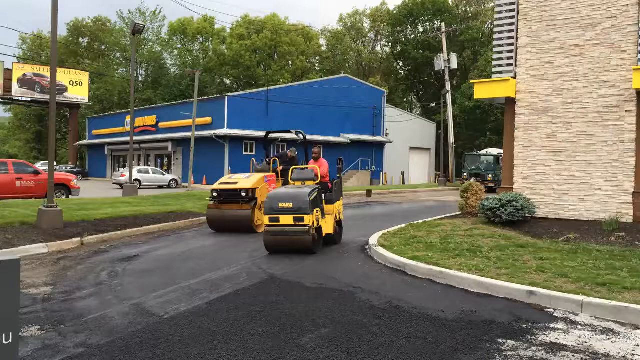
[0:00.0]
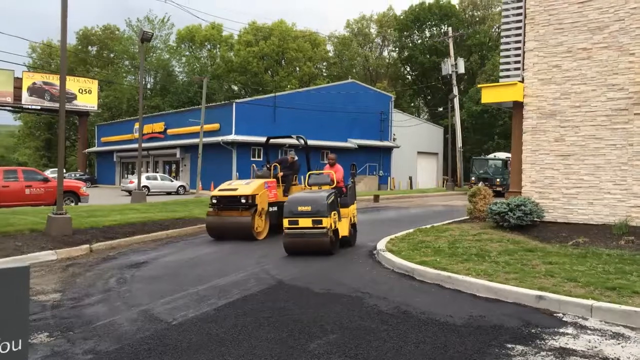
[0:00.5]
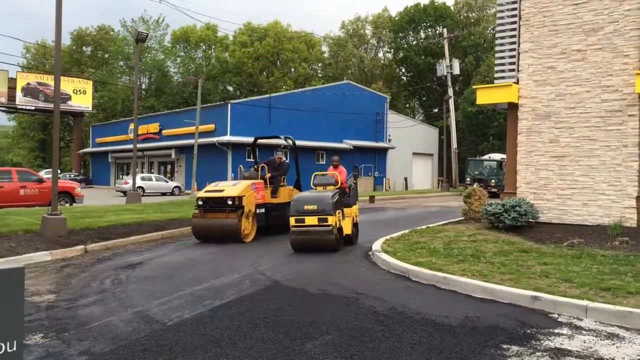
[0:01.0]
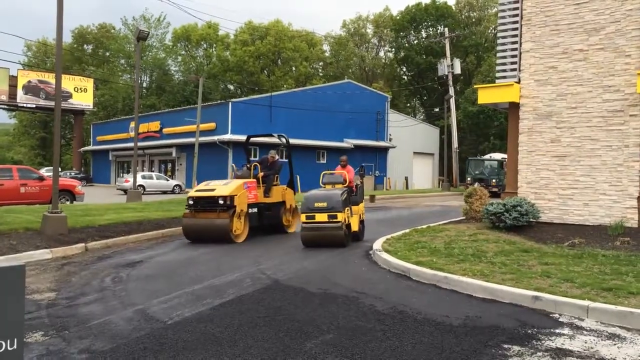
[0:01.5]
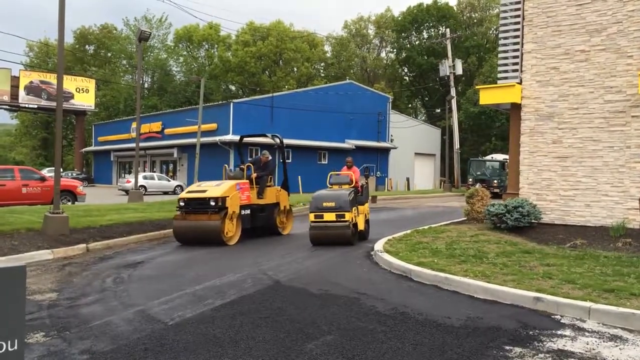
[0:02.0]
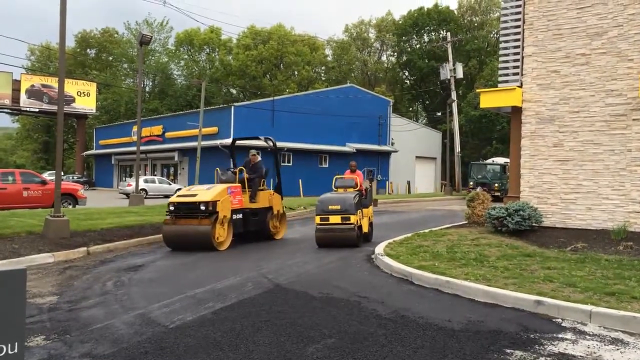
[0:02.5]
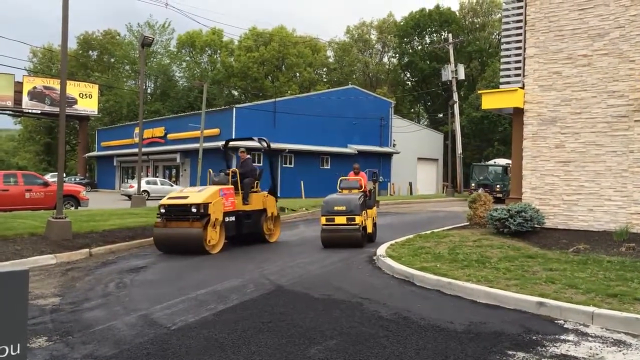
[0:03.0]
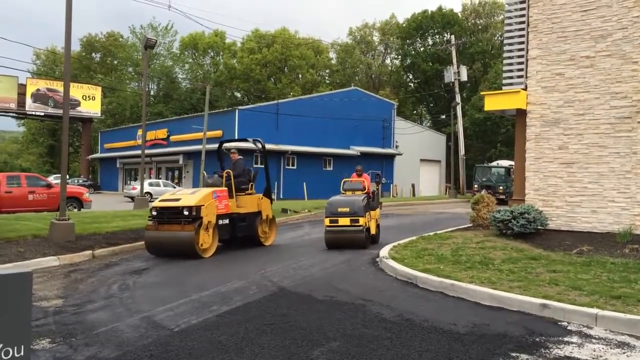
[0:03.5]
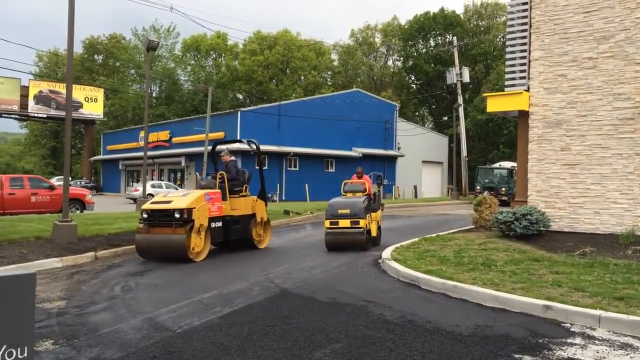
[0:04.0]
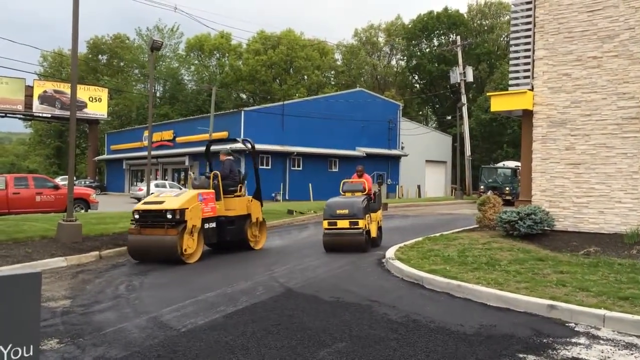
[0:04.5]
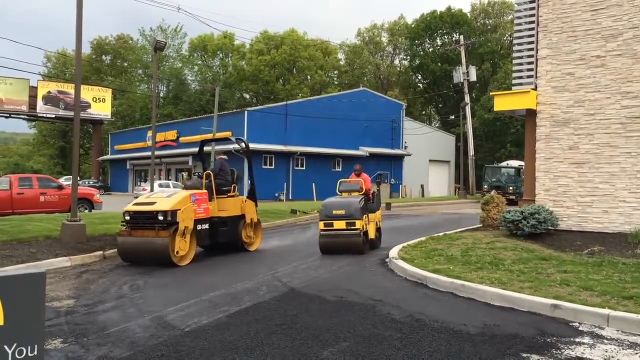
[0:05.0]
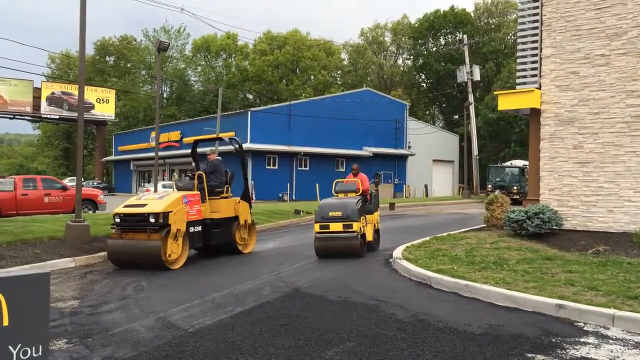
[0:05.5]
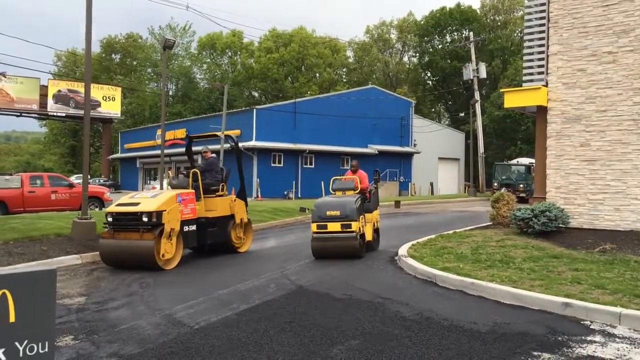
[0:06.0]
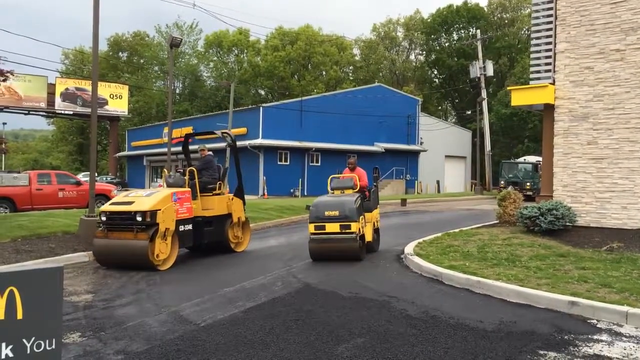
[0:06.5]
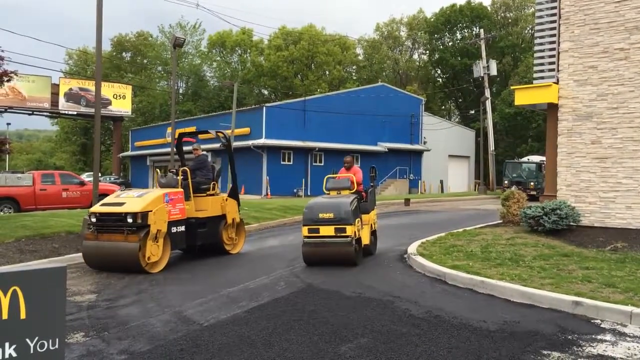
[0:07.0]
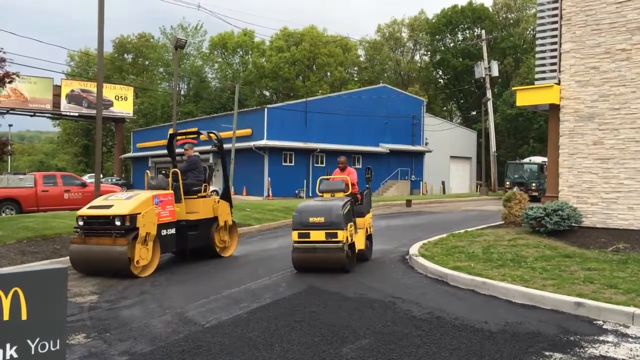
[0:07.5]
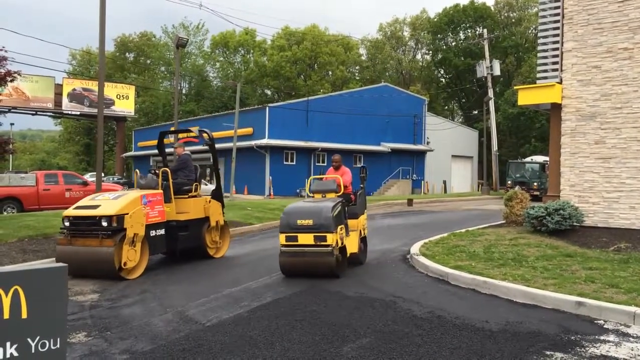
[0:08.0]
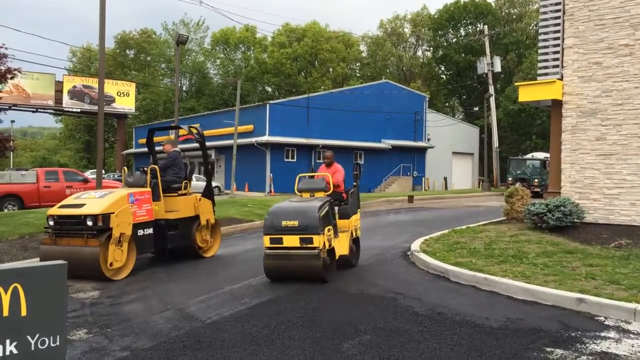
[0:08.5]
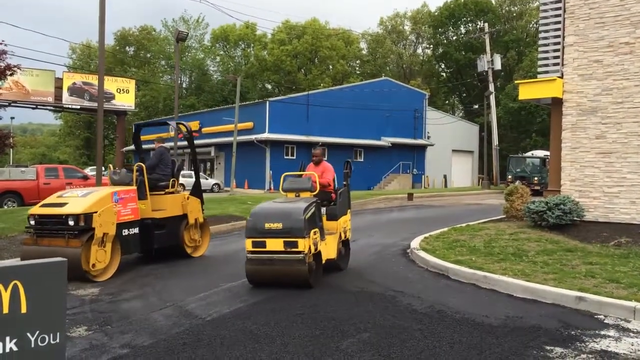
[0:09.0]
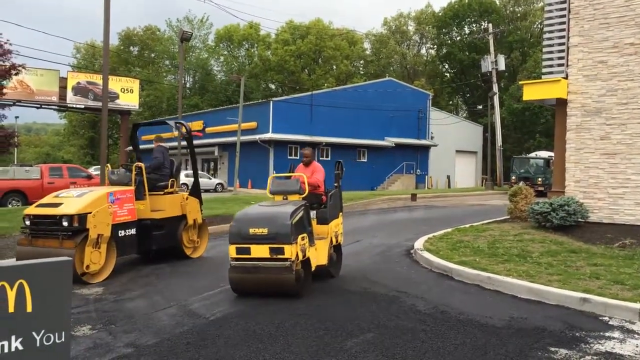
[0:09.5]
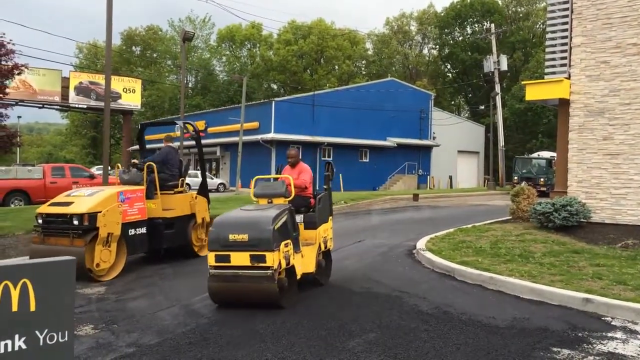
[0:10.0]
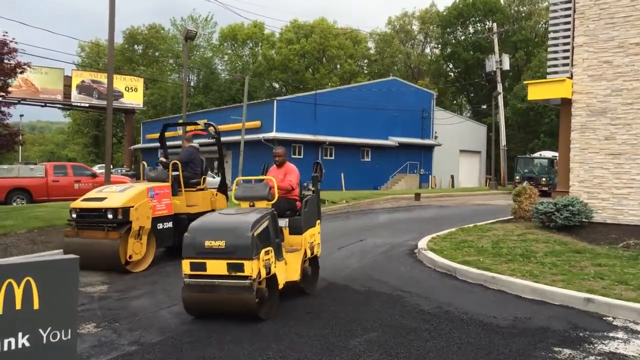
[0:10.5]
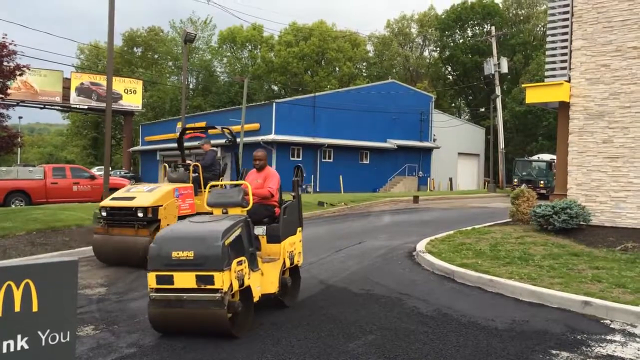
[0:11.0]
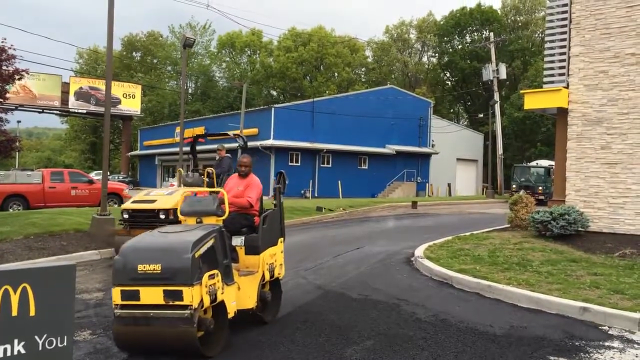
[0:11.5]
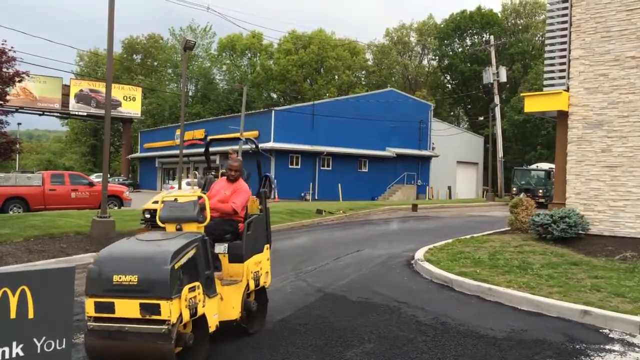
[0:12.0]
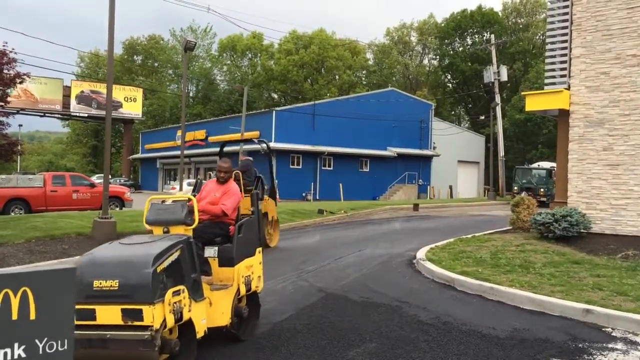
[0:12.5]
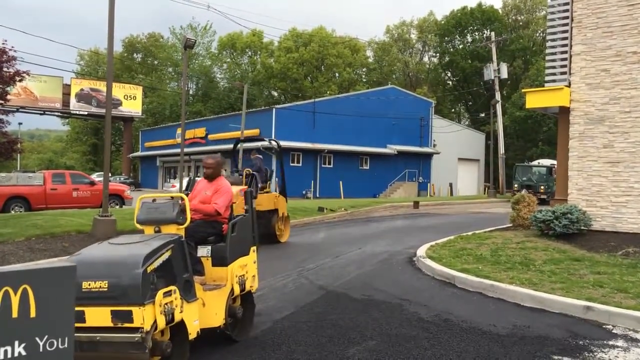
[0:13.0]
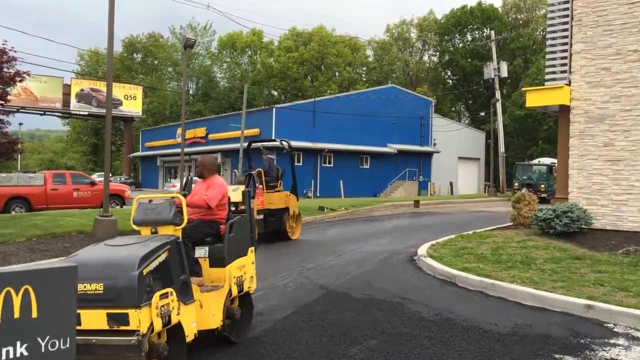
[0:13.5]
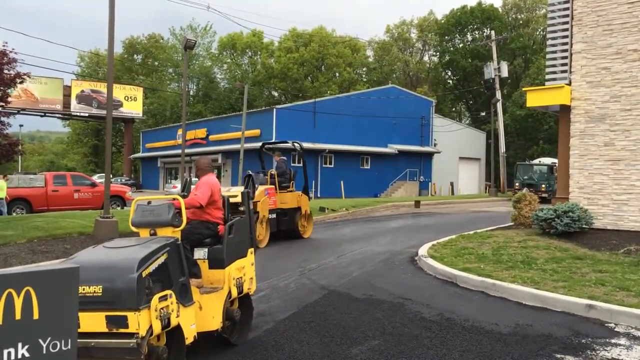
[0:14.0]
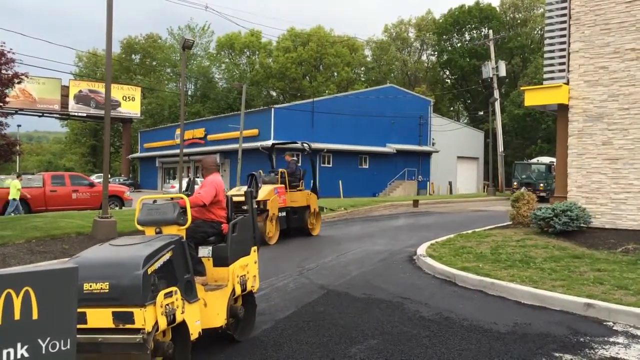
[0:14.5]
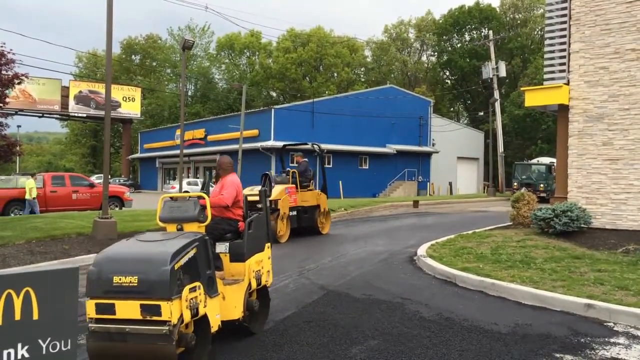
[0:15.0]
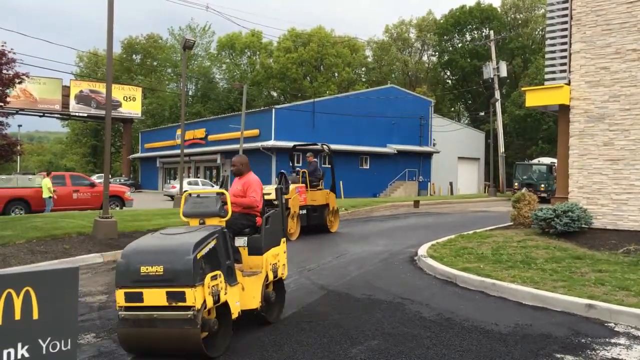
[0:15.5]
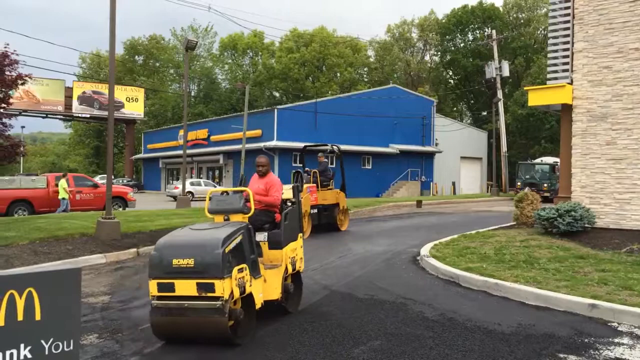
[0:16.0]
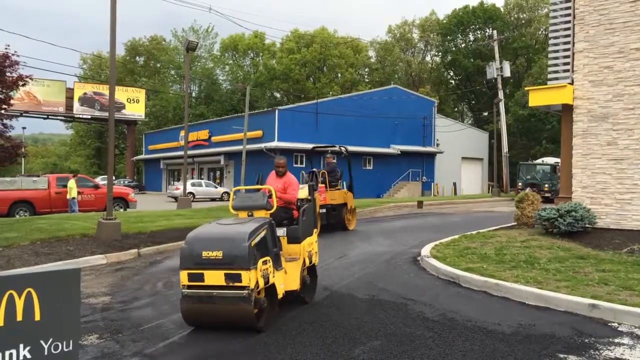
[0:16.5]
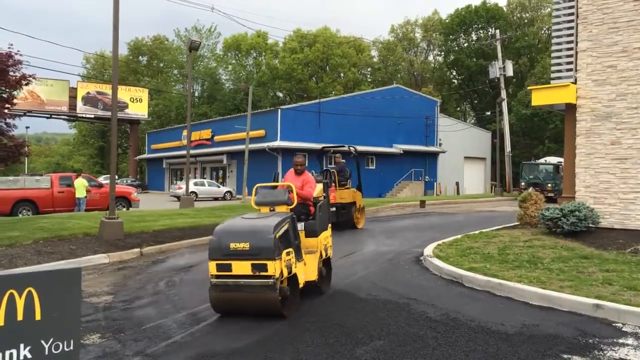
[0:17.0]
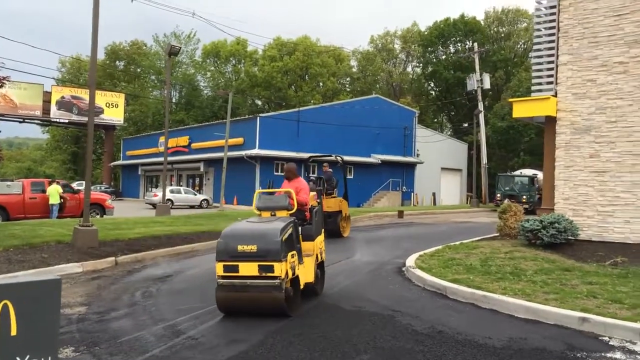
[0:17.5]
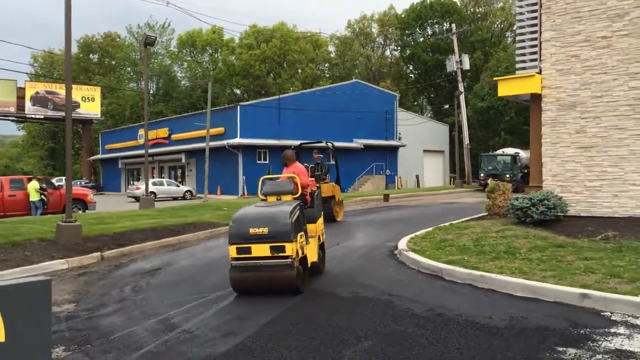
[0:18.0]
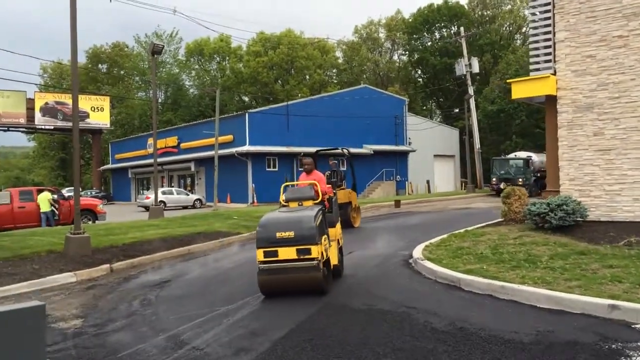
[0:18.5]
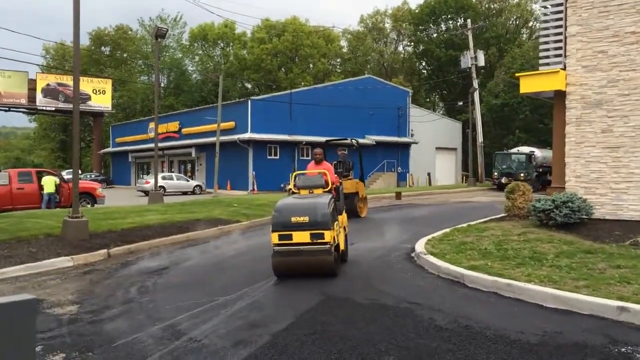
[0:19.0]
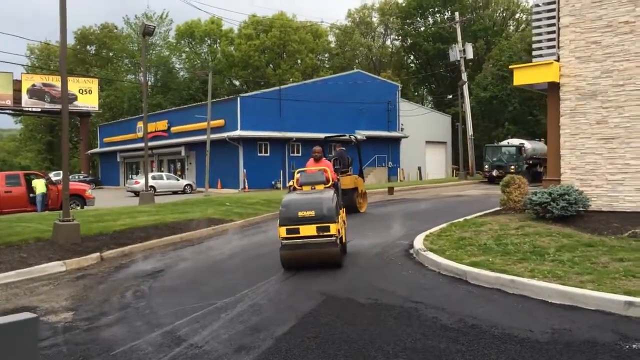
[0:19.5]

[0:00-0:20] What looks like a construction site appears, where two men drive two steamrollers to pave a road in front of a building. At one point a McDonald's logo is visible, so this may be a McDonald's that is about to open, with the workers perhaps working on the drive-thru. In the distance there is a blue building with some traces of yellow on top. Behind that building are trees, quite full. On the left side of the screen, about four poles carry what look like power lines or communication cables.